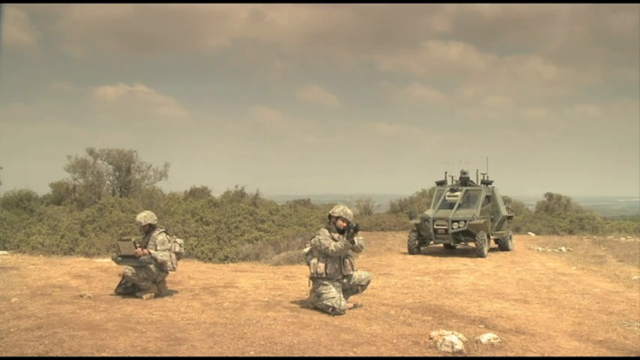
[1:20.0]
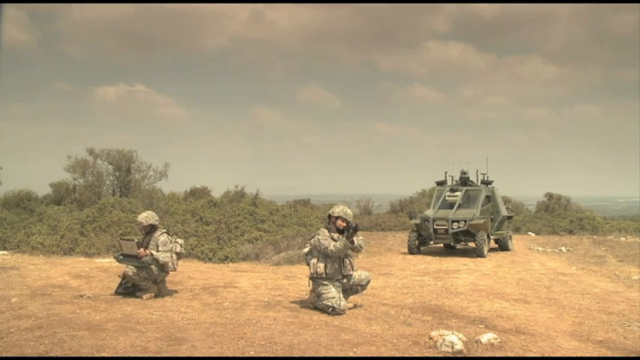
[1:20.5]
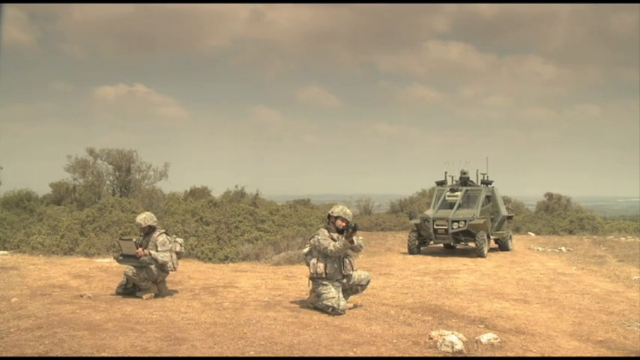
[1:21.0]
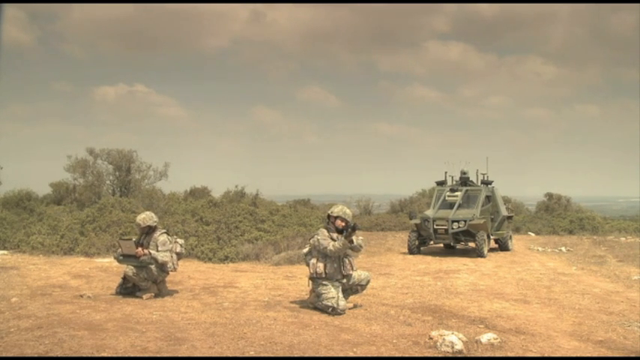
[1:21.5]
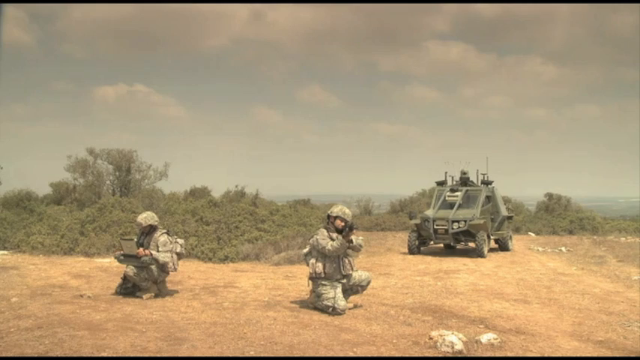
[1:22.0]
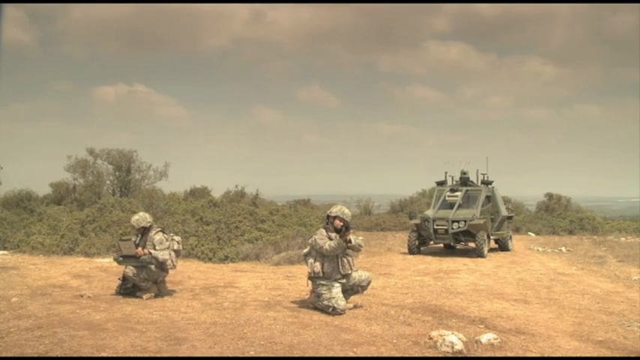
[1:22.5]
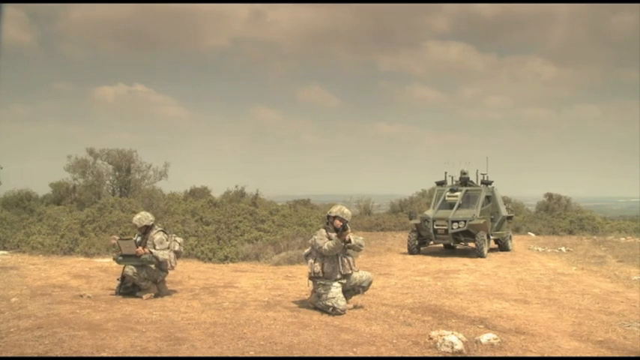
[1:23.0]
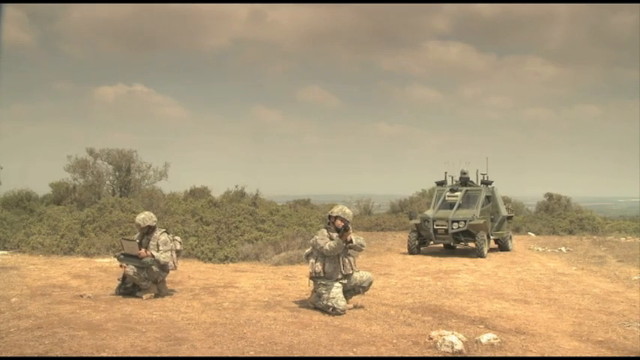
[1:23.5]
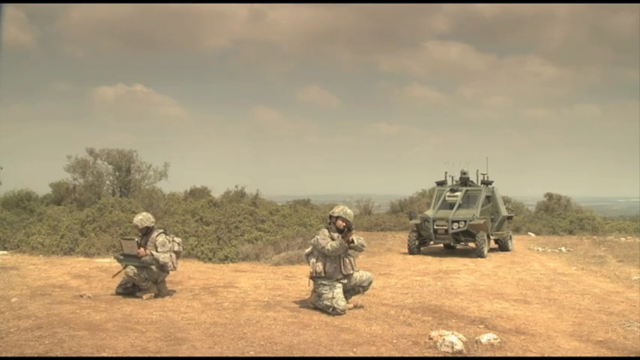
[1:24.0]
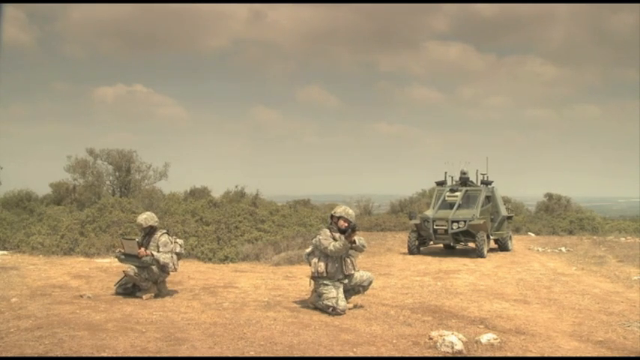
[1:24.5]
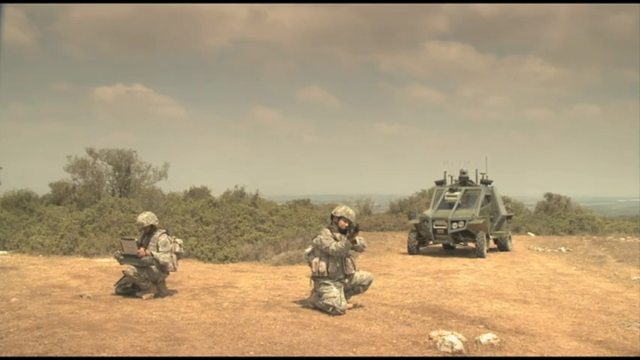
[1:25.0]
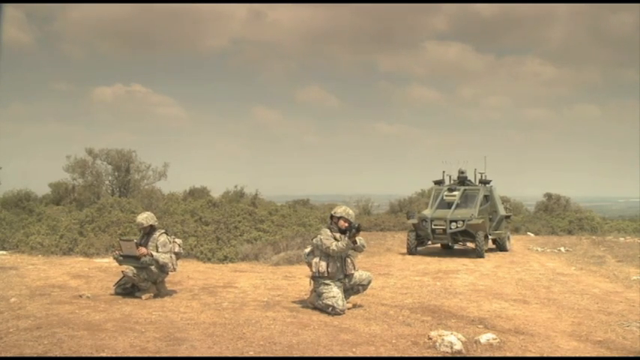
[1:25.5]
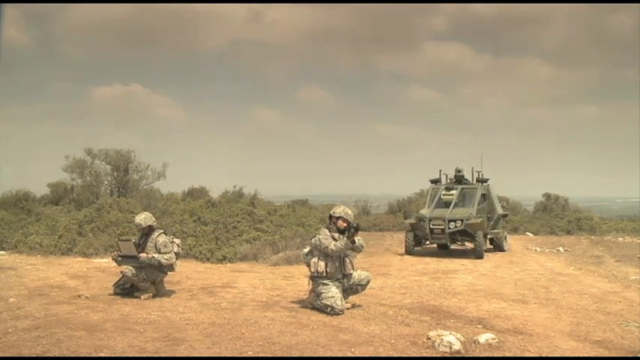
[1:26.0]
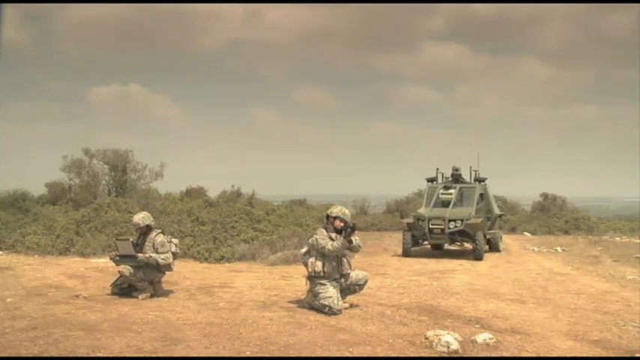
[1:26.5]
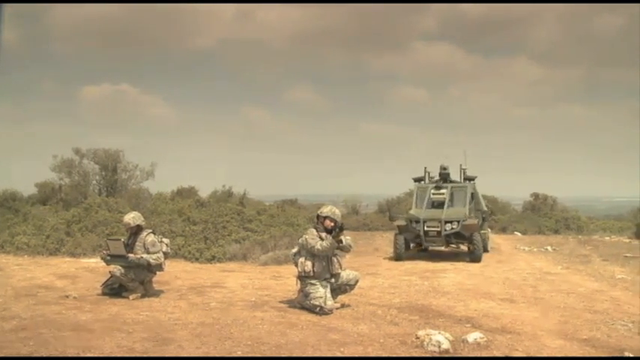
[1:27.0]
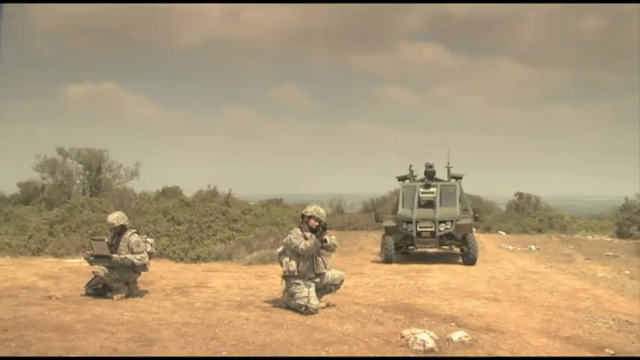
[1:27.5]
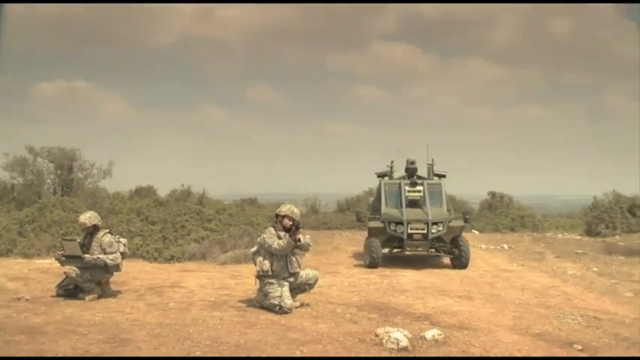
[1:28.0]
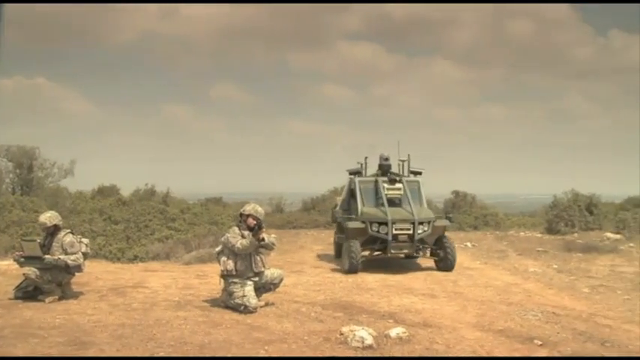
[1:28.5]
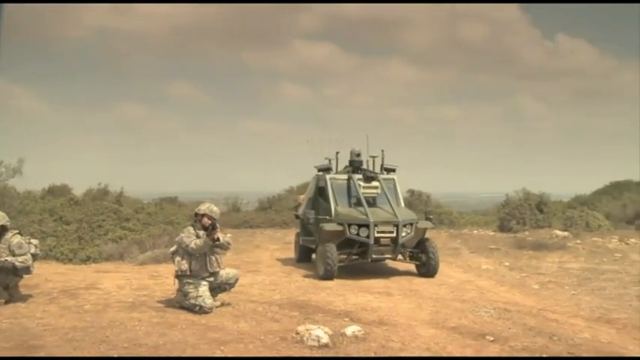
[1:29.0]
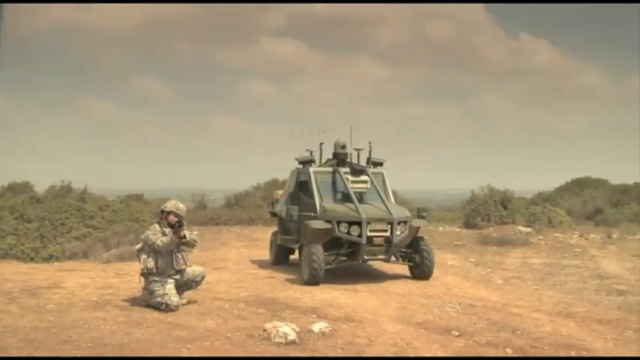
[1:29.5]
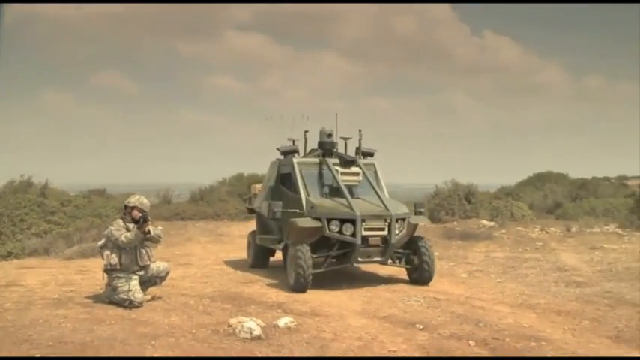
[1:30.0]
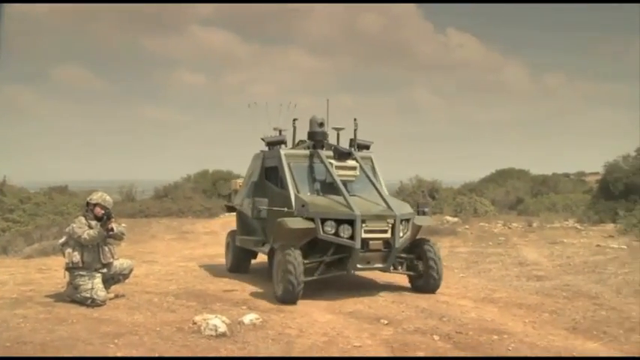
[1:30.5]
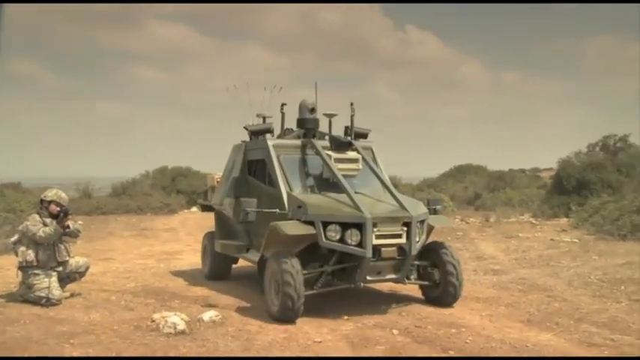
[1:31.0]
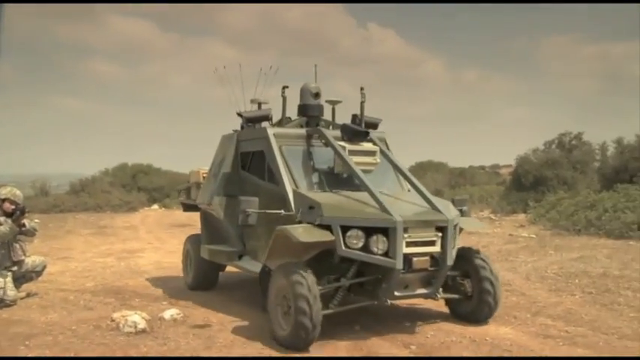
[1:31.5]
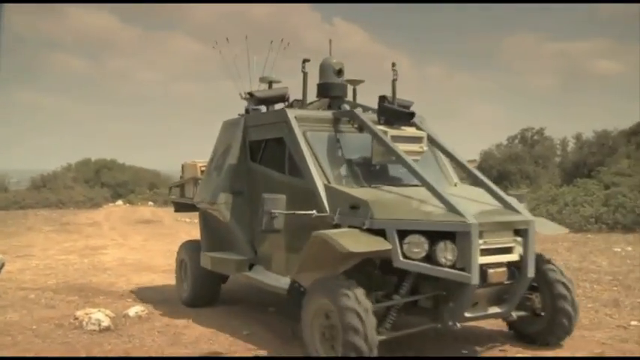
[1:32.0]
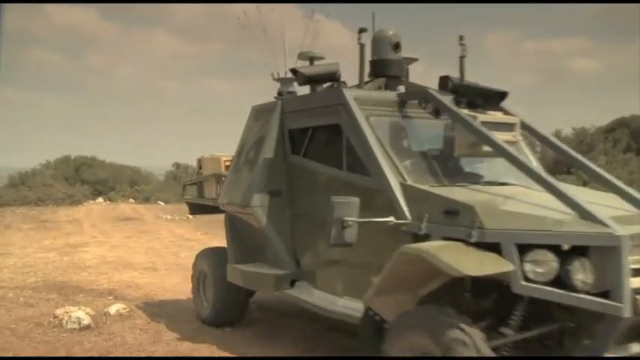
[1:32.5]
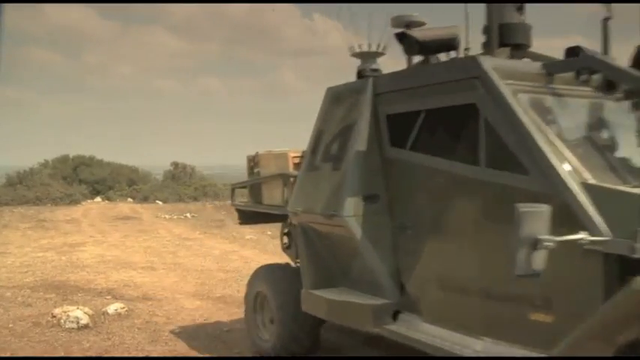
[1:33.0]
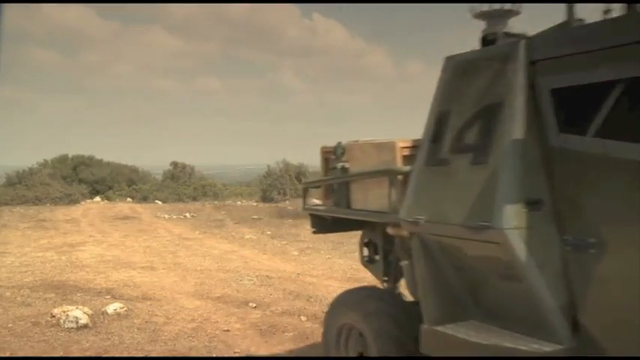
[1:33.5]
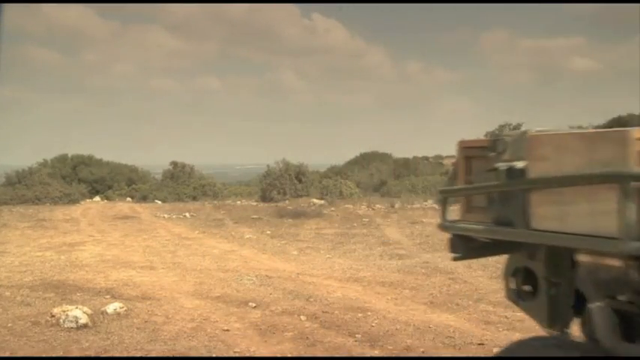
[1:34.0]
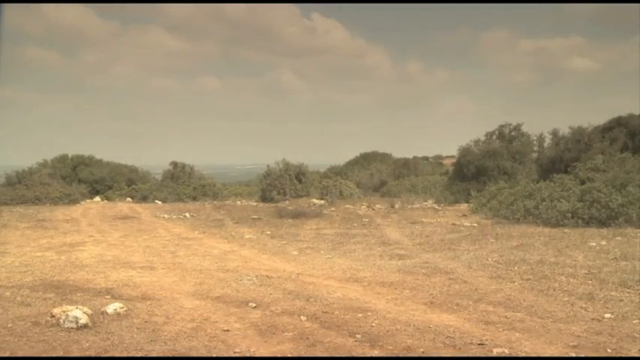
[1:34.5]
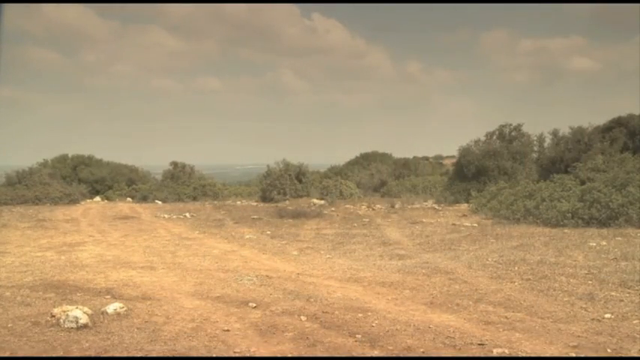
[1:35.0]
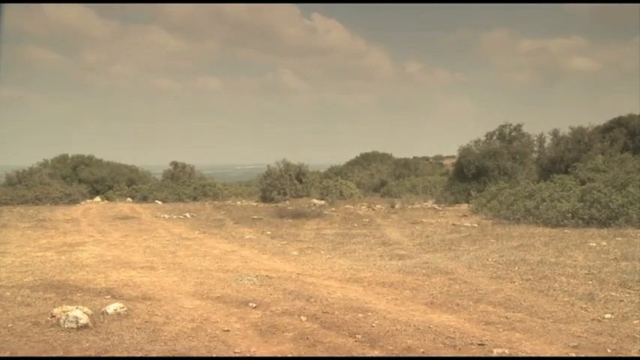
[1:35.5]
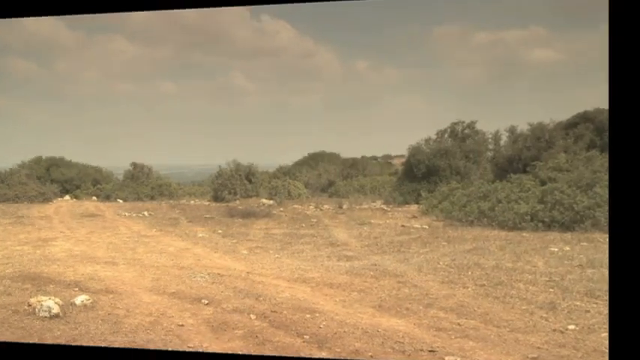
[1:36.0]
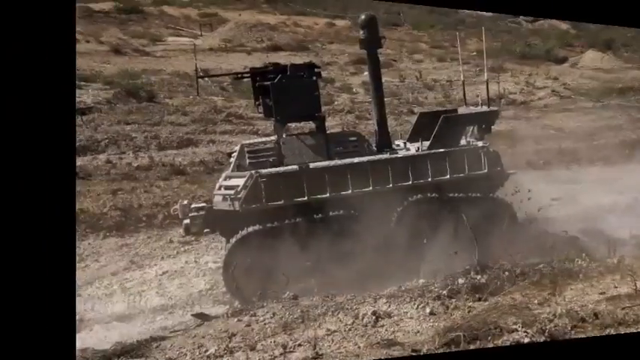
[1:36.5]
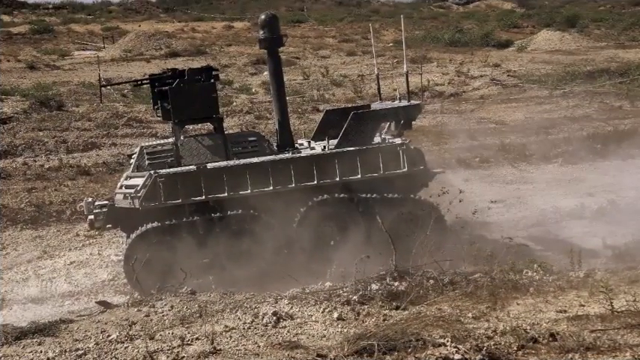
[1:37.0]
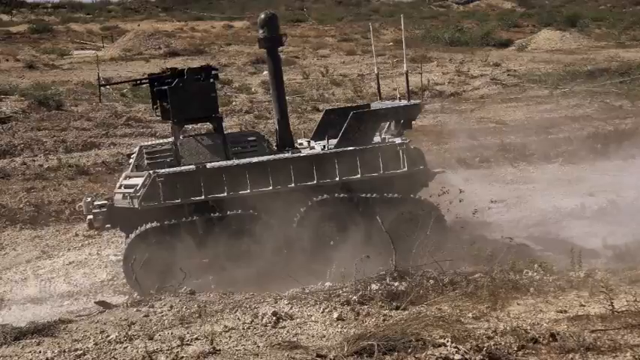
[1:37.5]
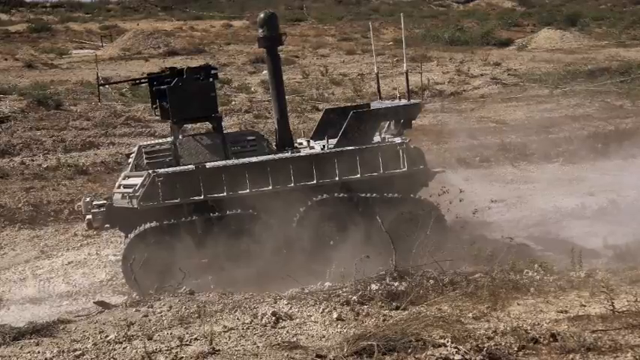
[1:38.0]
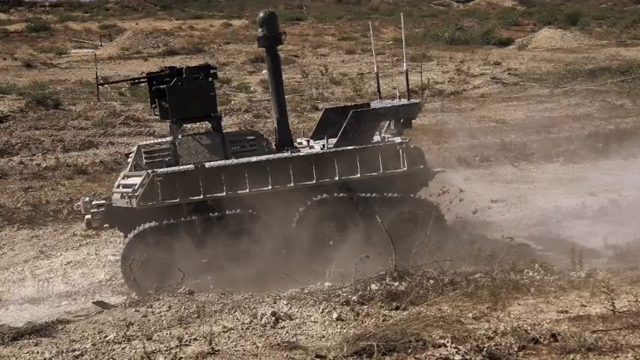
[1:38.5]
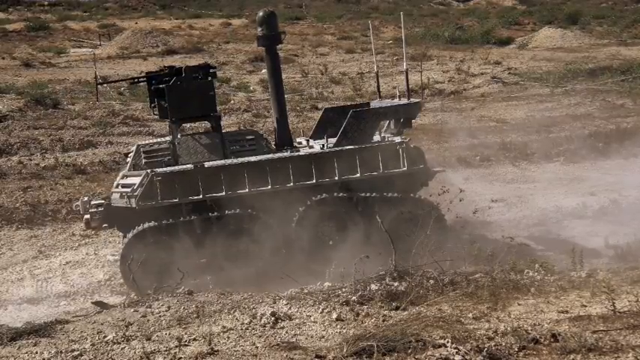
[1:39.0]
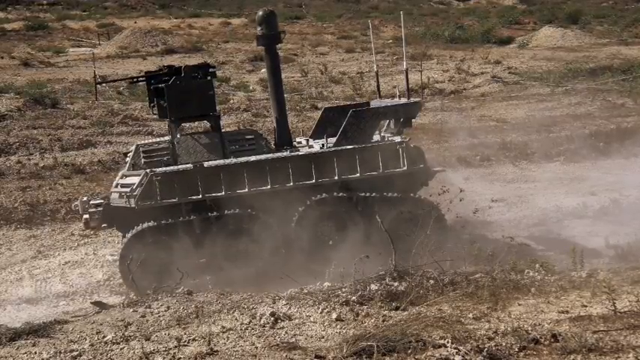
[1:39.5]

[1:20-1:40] The skies are really dim and not bright, and the clouds look dirty. There seem to be two men who are like soldiers, wearing military hats and military suits, and they seem to have all the equipment they need. One of them has a computer or GPS tracker, and the man on the right side seems to have a gun ready and loaded. They are hiding on the dusty road path. The background seems to be a blue sea or ocean, but it is covered by long bushes that seem not to have been trimmed in a while. There is also a small car belonging to these soldiers, which seems ready for battle action. The car seems to have weapons on it, probably a gun or a cannon, and its light bulbs are a bit smaller than usual.